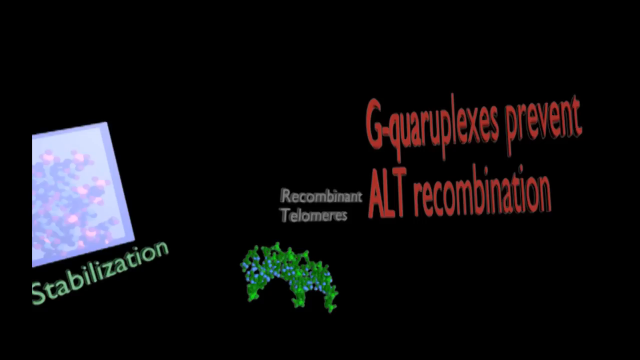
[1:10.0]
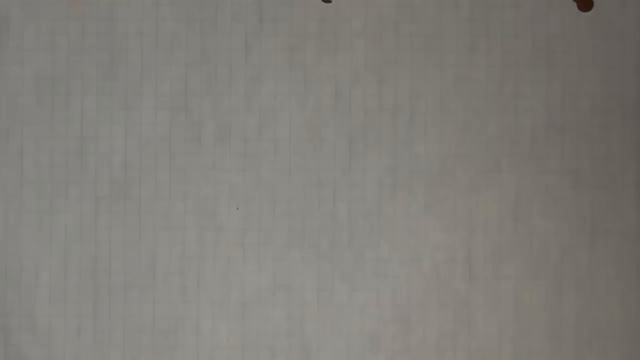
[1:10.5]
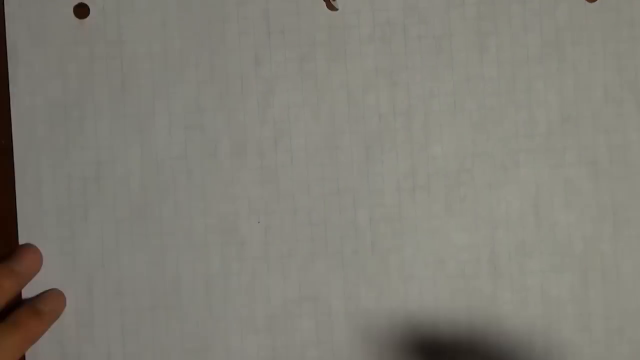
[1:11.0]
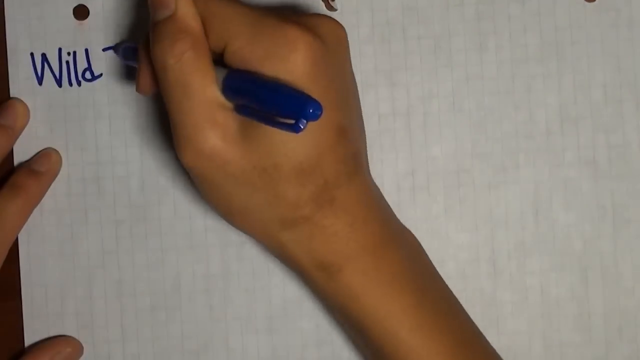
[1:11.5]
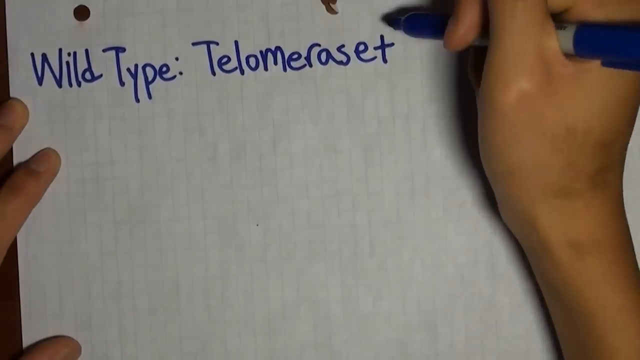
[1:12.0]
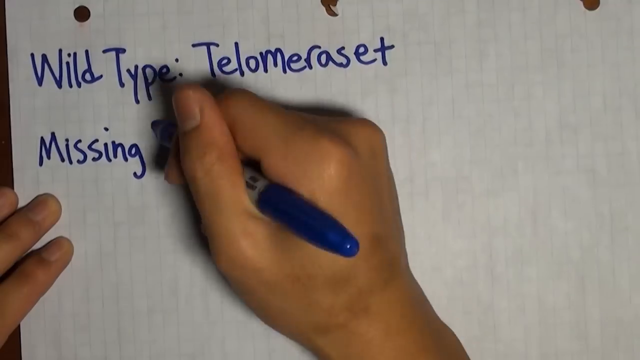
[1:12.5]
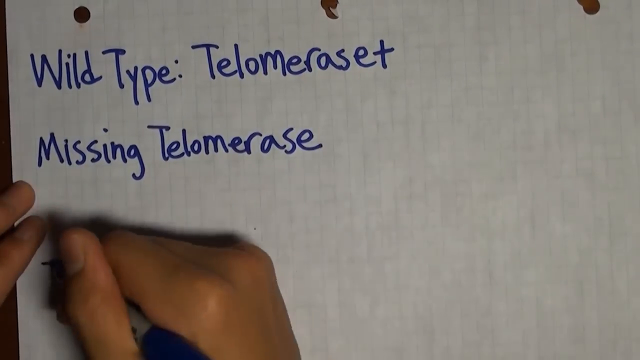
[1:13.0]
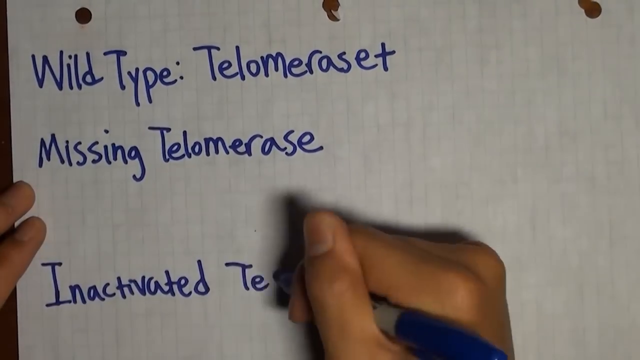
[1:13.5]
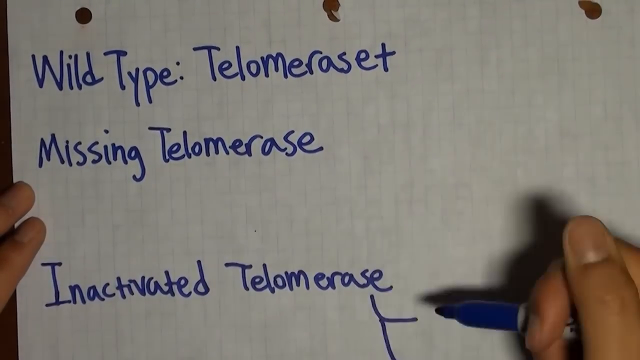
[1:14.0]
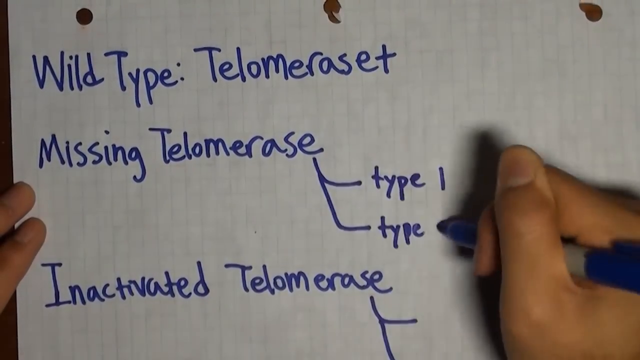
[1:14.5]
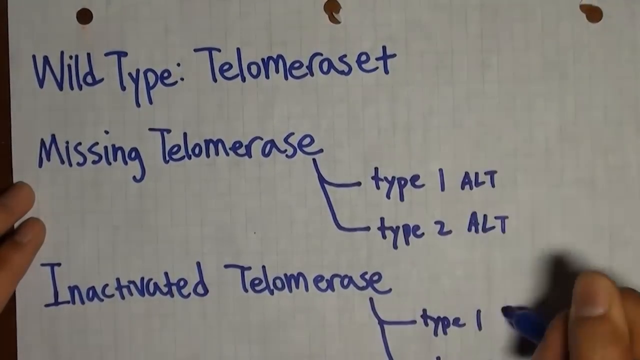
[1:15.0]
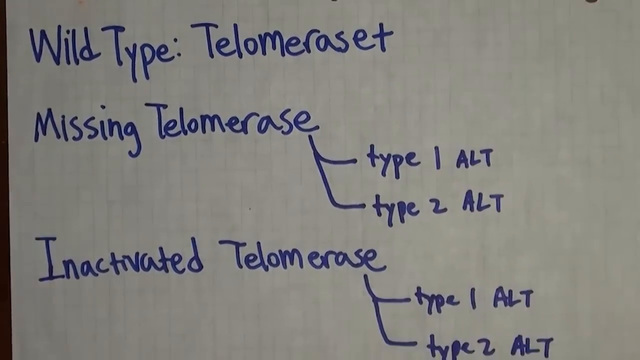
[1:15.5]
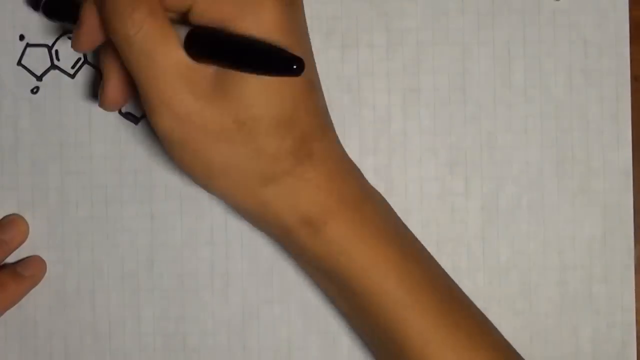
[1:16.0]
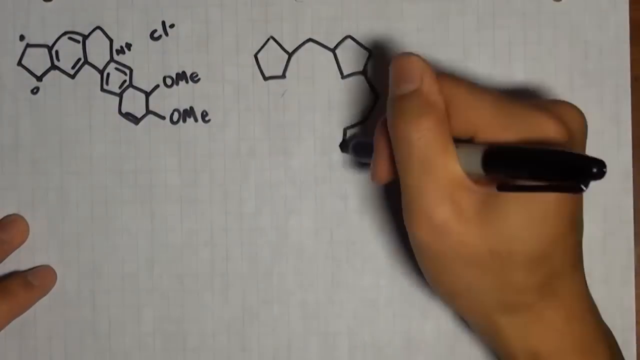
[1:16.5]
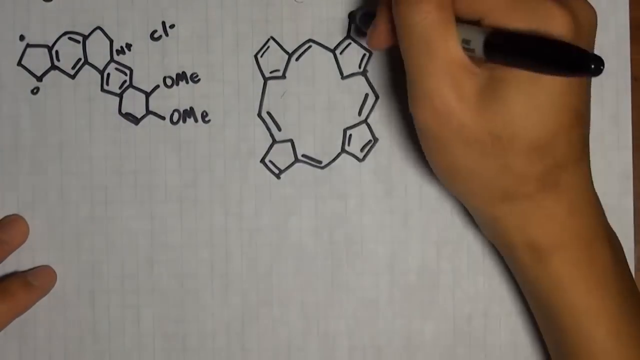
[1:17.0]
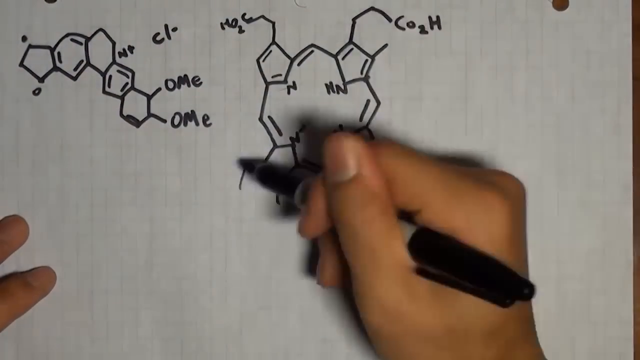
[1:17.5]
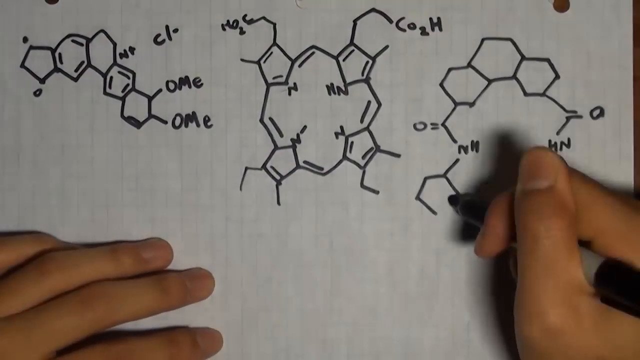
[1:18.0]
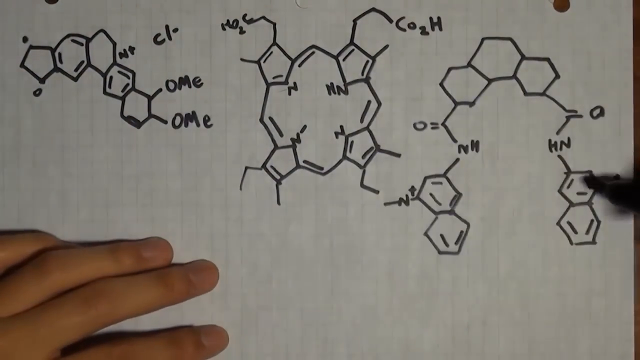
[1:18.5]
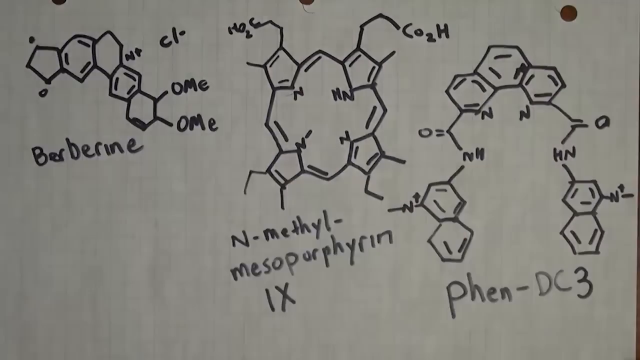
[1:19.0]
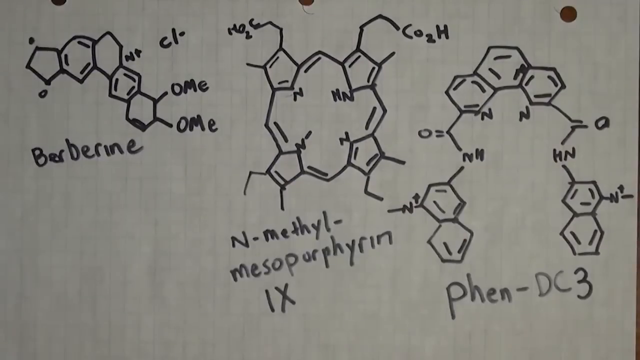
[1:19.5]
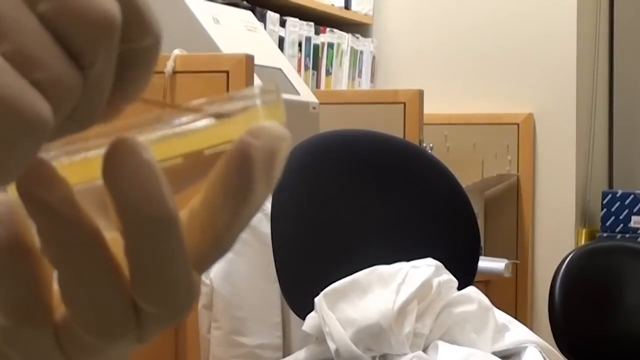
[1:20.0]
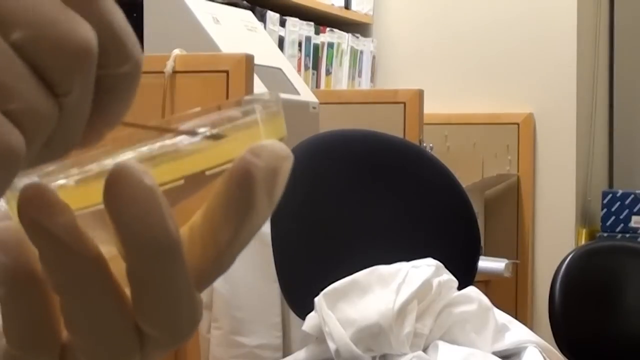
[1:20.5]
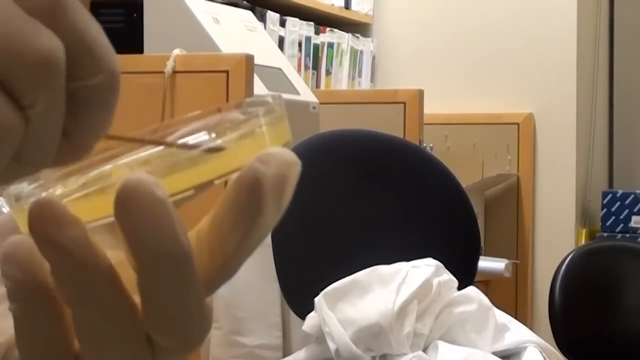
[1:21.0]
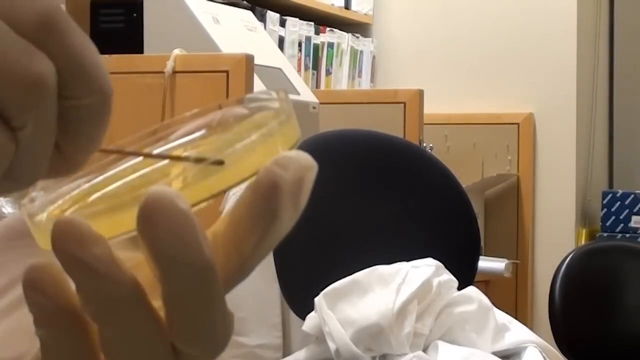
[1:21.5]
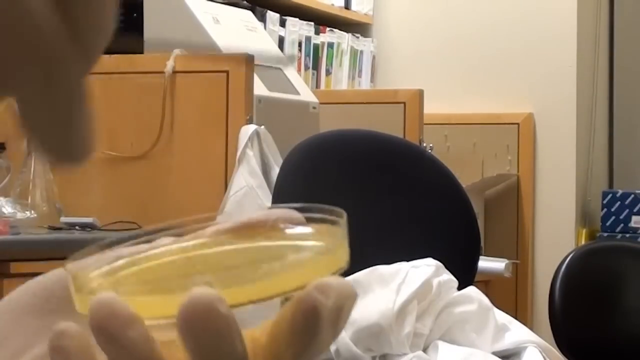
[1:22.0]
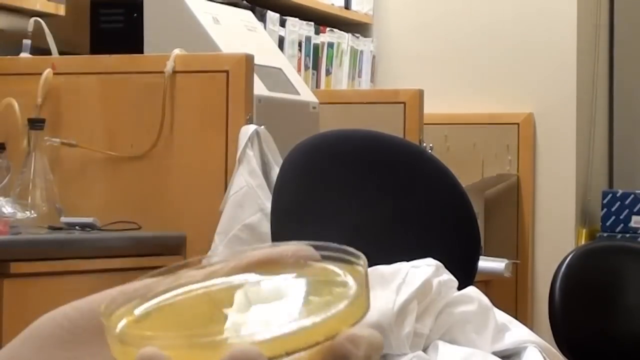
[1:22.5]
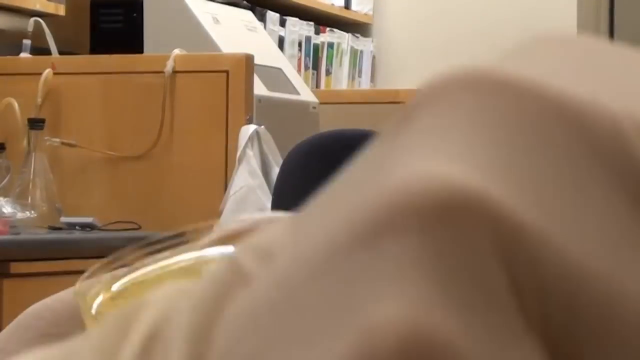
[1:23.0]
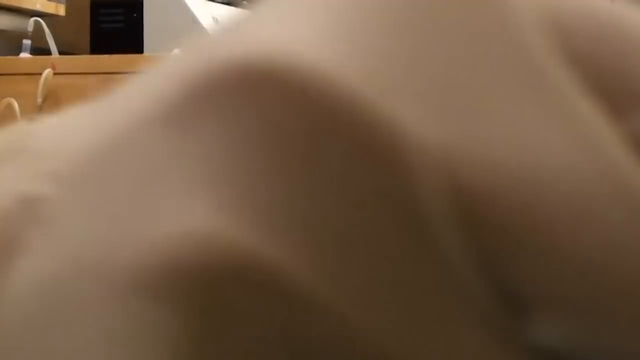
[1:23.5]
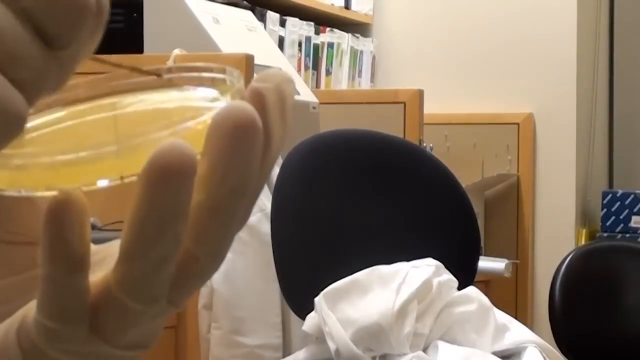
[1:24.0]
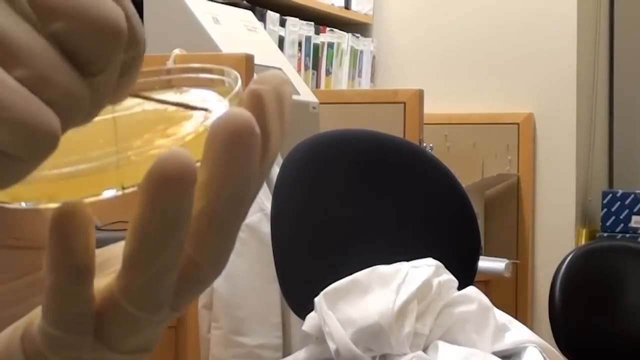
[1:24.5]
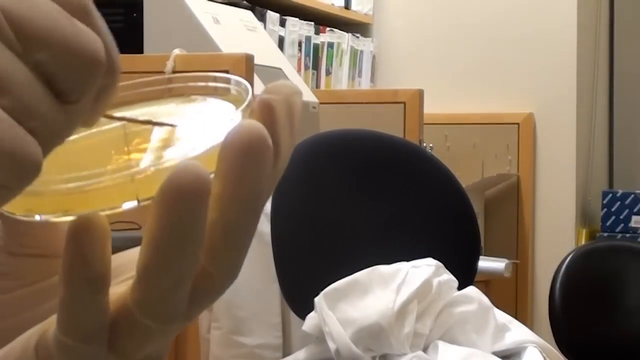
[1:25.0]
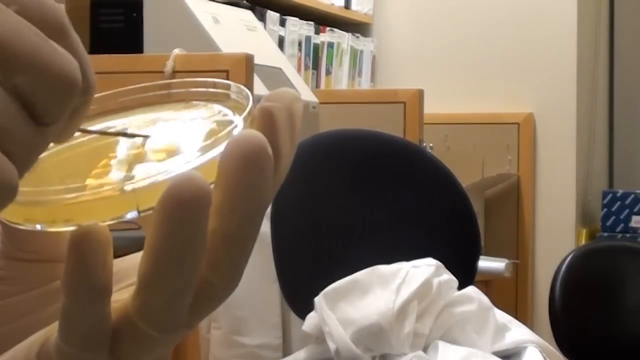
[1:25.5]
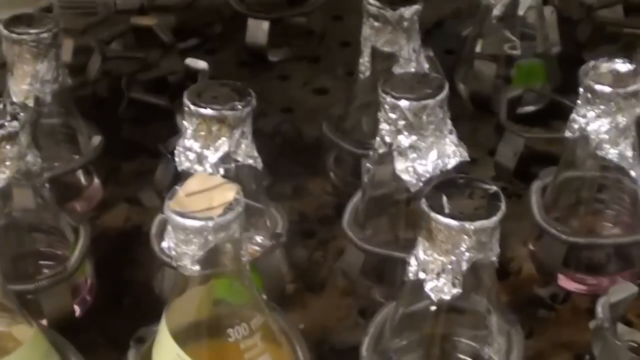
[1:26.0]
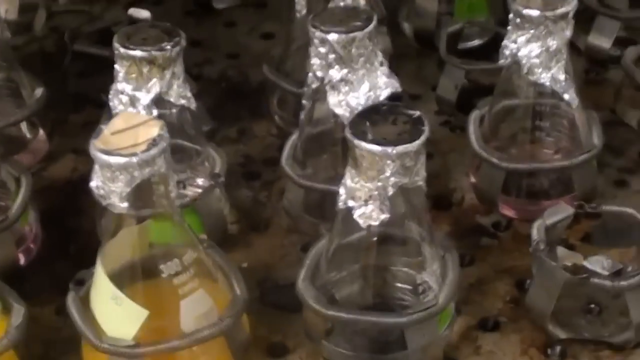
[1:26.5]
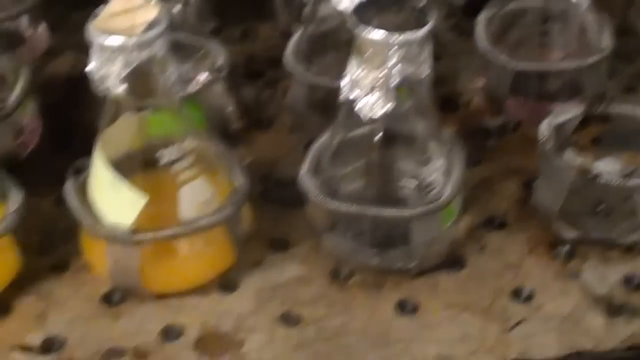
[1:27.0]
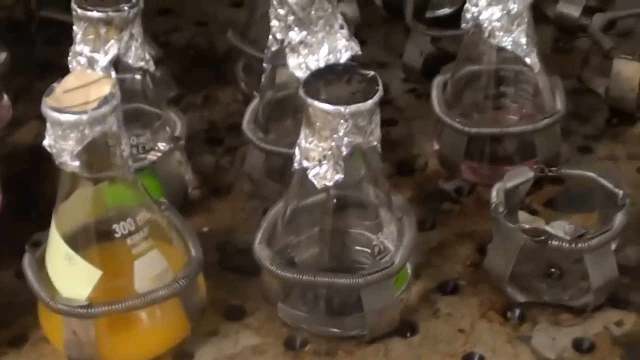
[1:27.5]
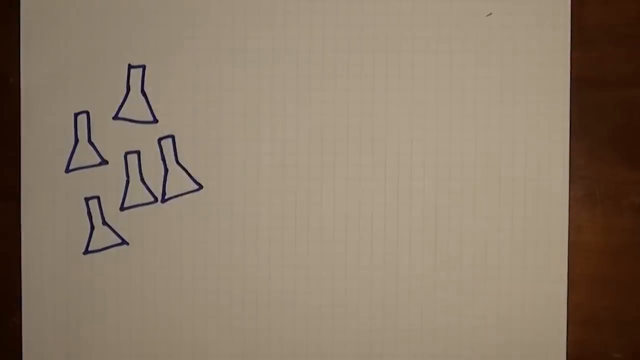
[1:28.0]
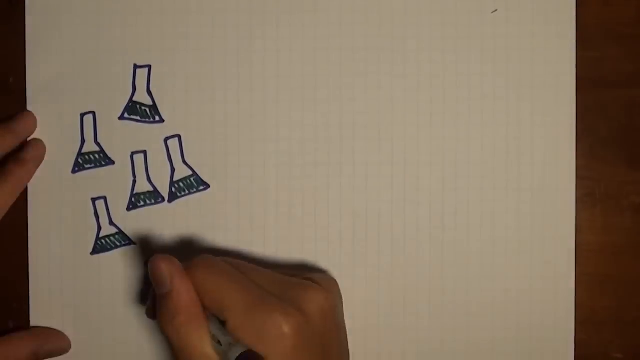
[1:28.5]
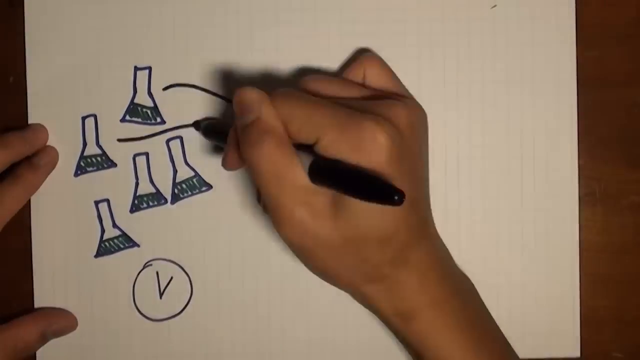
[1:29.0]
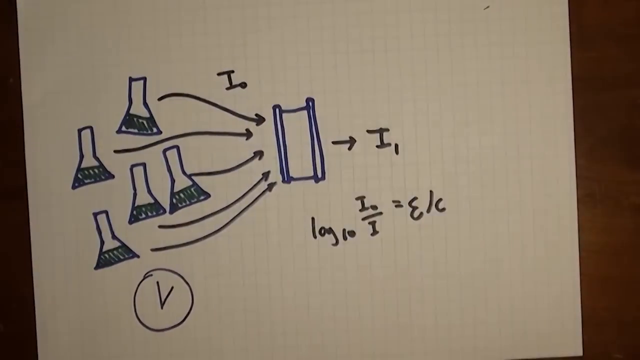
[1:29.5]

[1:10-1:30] The screen shows text including "stabilization," "recombinant telomeres" and "prevent ALT recombination," while the person draws what looks to be molecules. Then a person with a Petri dish stirs something in it.